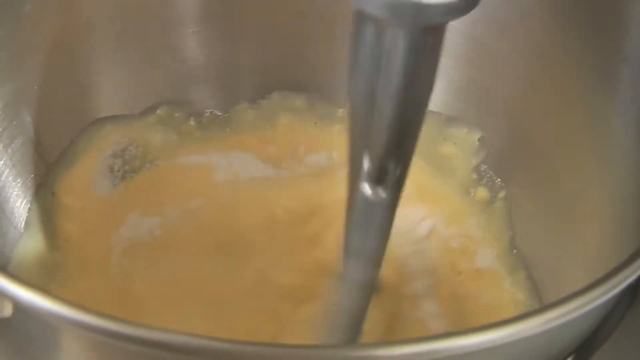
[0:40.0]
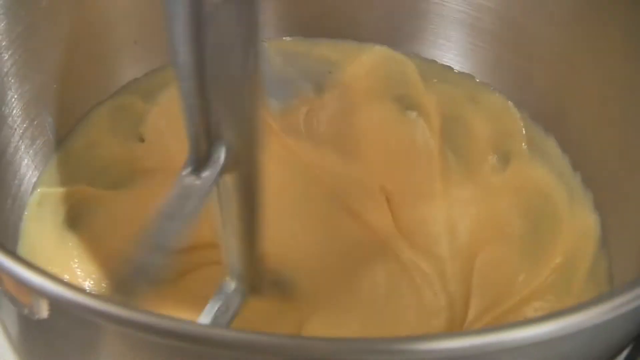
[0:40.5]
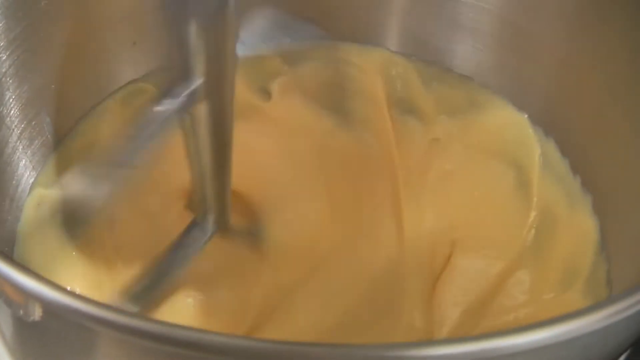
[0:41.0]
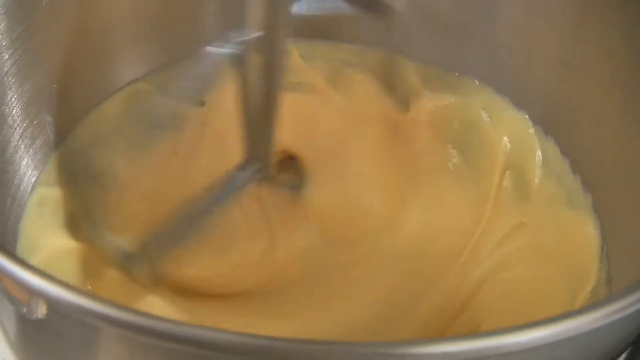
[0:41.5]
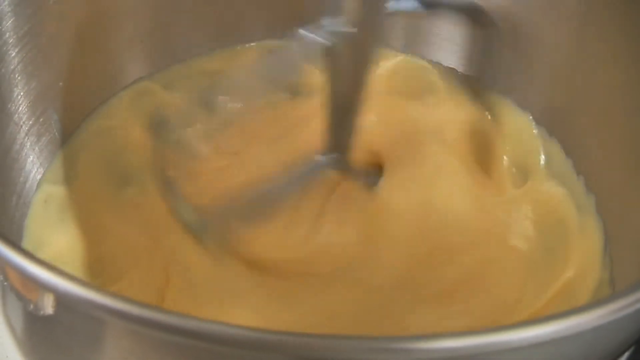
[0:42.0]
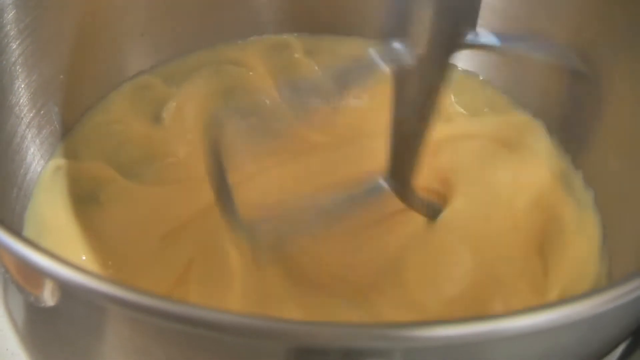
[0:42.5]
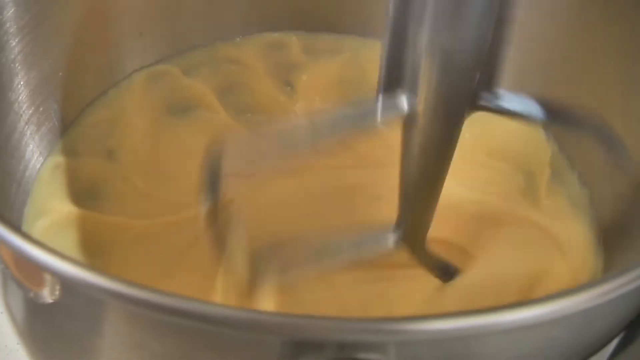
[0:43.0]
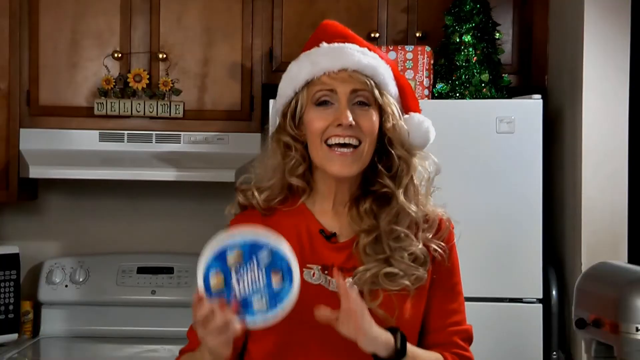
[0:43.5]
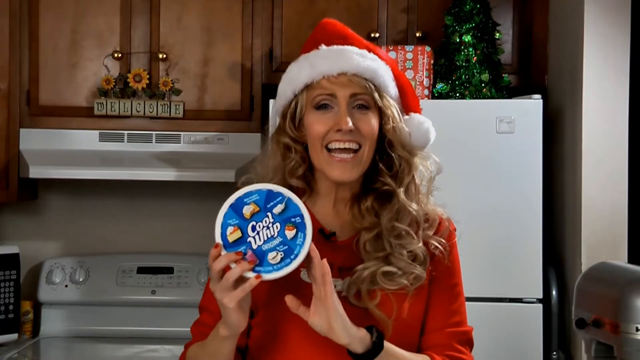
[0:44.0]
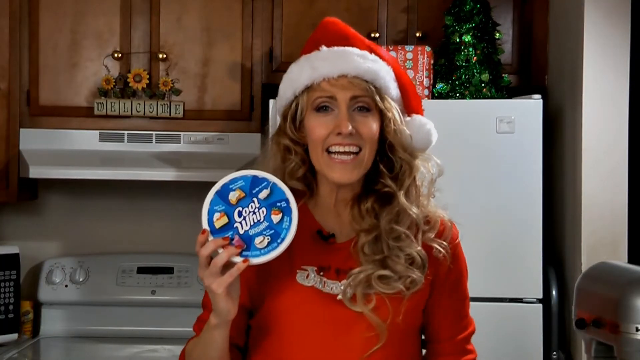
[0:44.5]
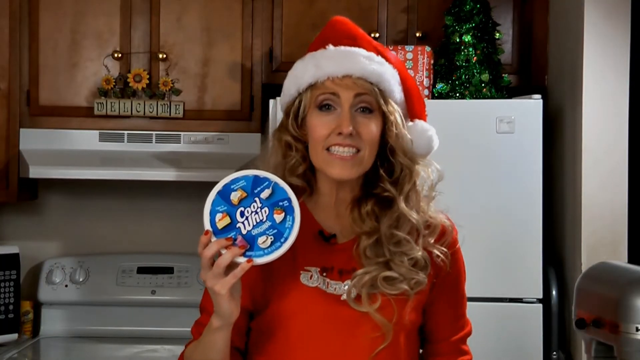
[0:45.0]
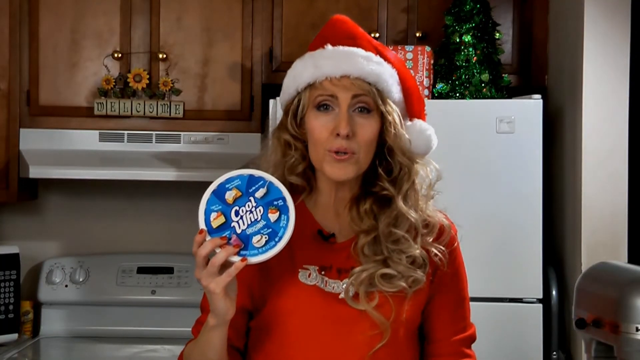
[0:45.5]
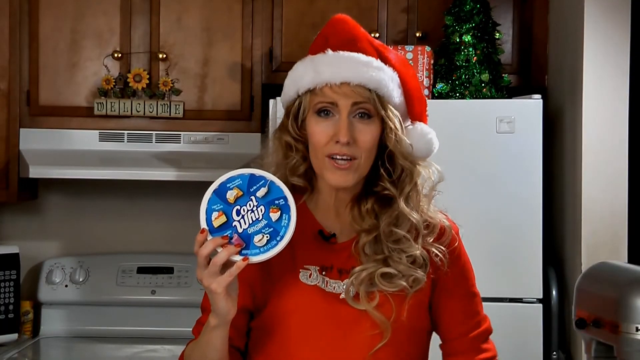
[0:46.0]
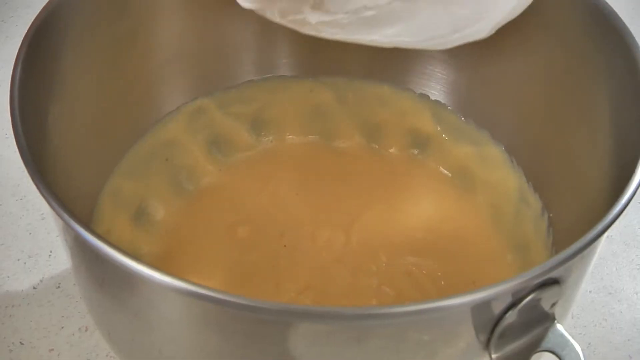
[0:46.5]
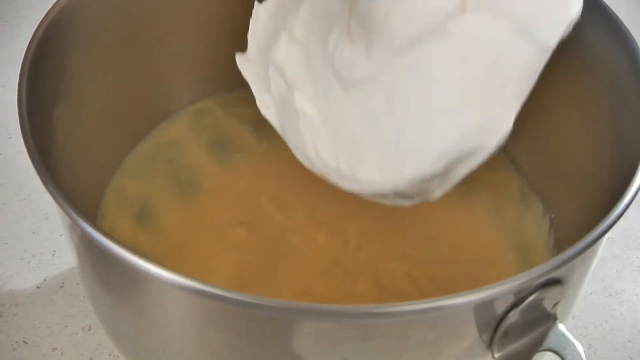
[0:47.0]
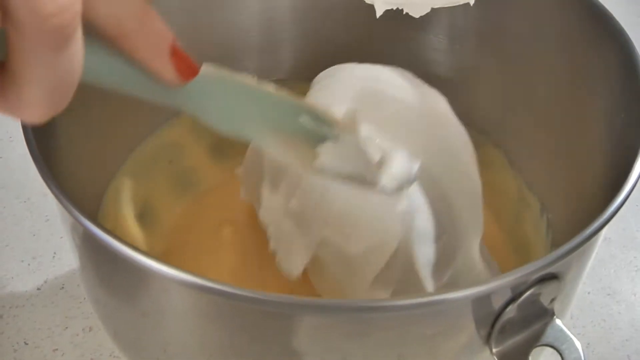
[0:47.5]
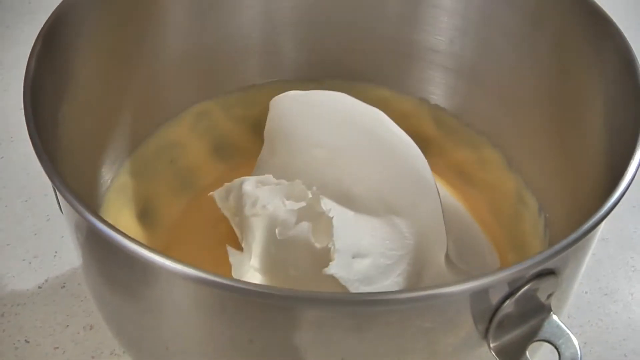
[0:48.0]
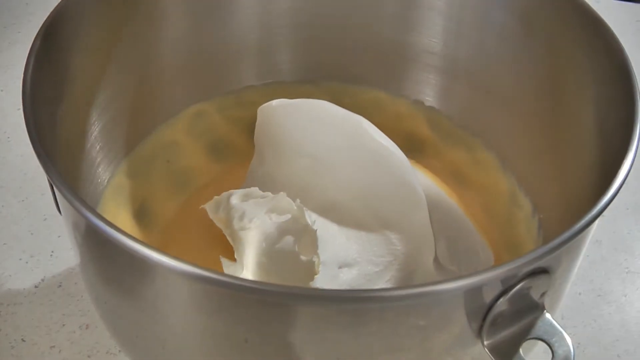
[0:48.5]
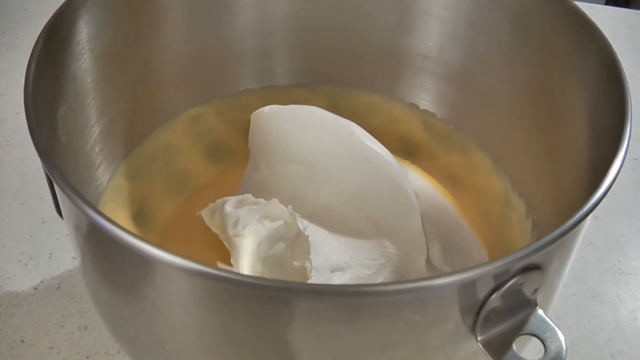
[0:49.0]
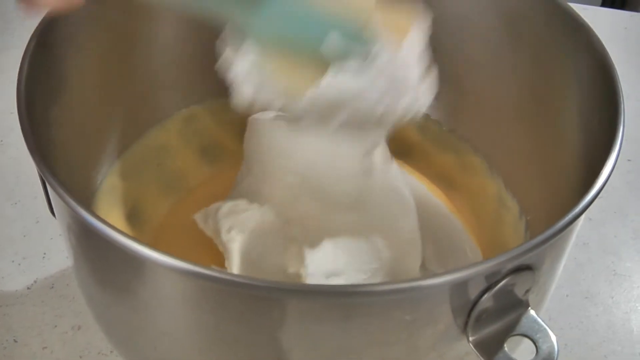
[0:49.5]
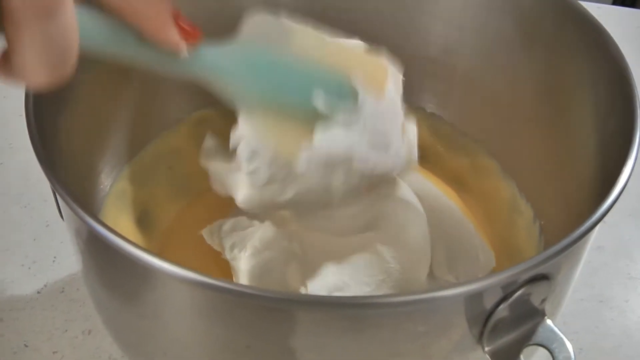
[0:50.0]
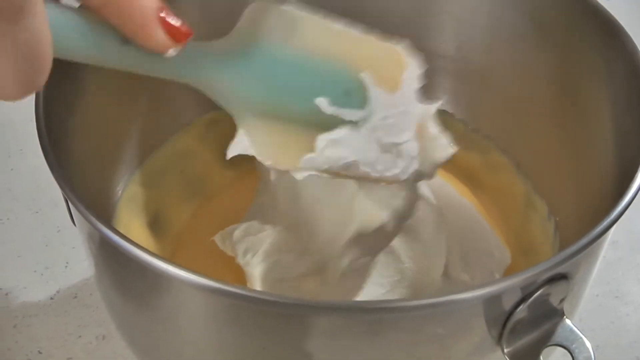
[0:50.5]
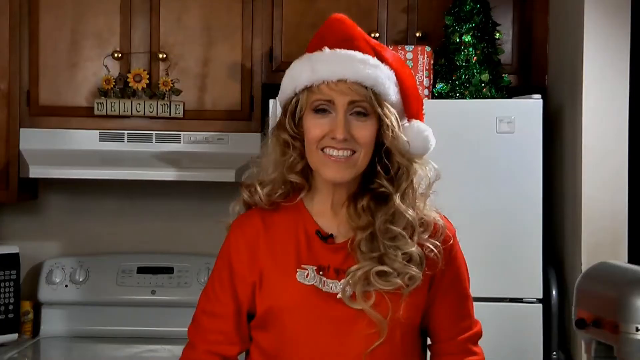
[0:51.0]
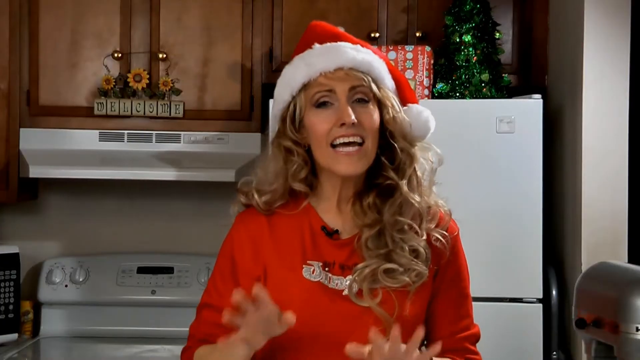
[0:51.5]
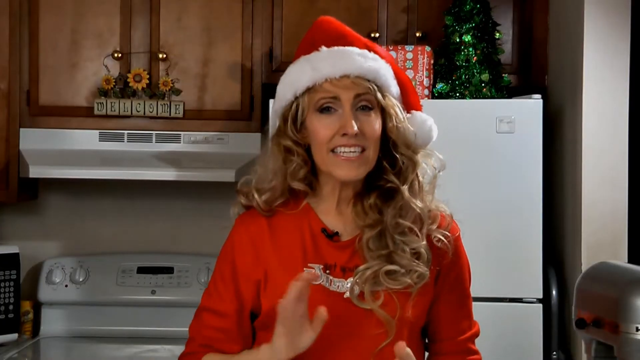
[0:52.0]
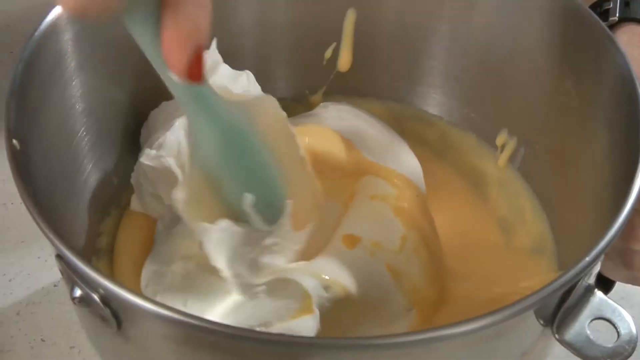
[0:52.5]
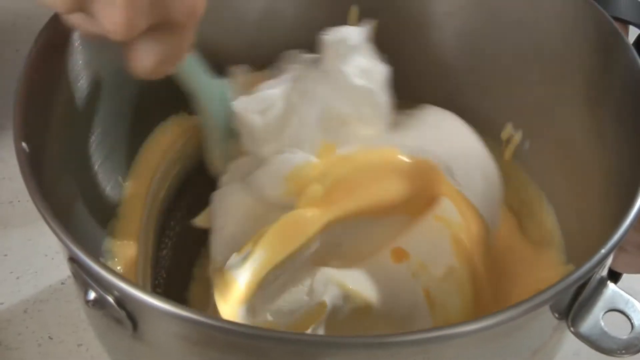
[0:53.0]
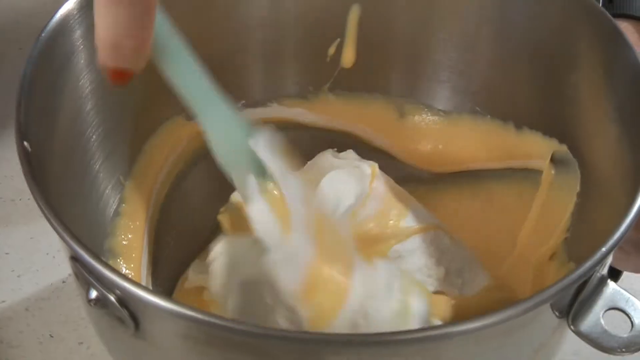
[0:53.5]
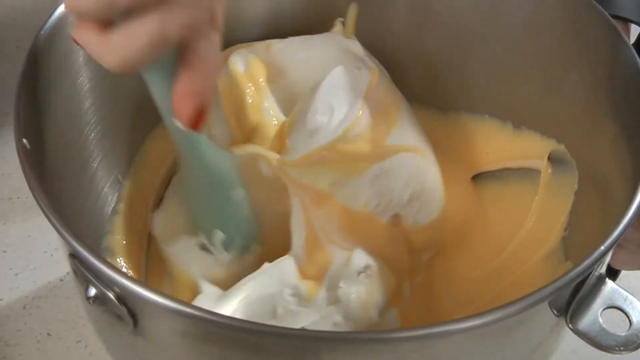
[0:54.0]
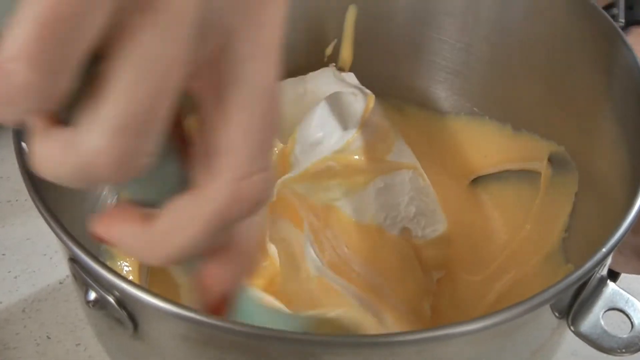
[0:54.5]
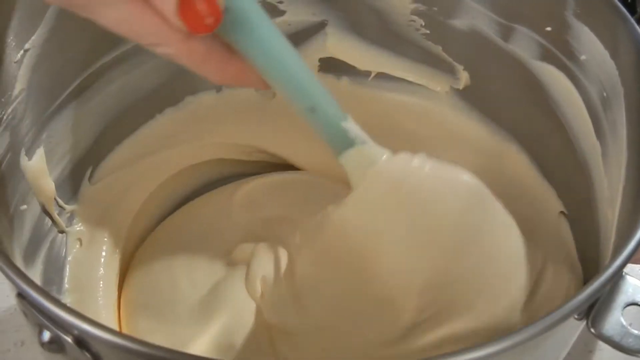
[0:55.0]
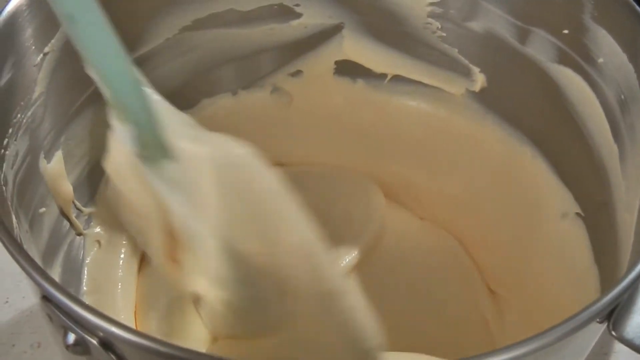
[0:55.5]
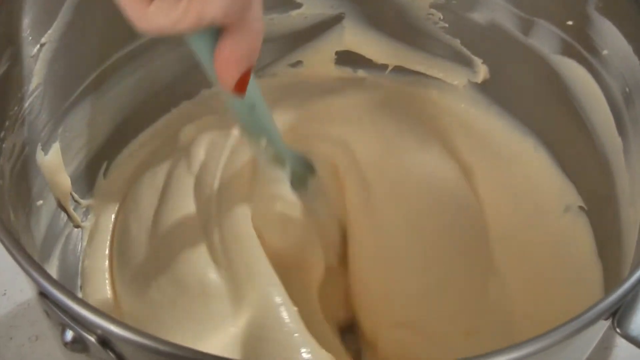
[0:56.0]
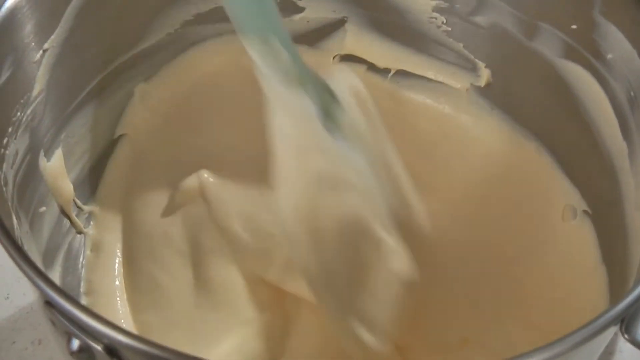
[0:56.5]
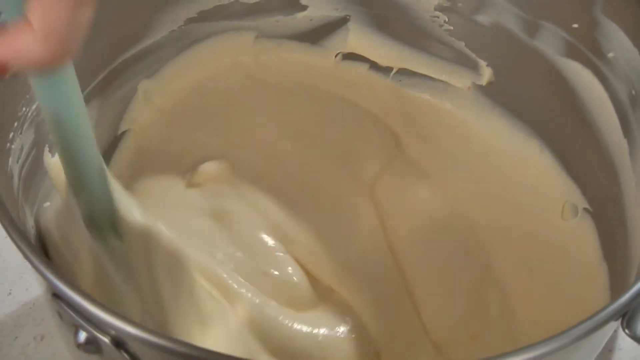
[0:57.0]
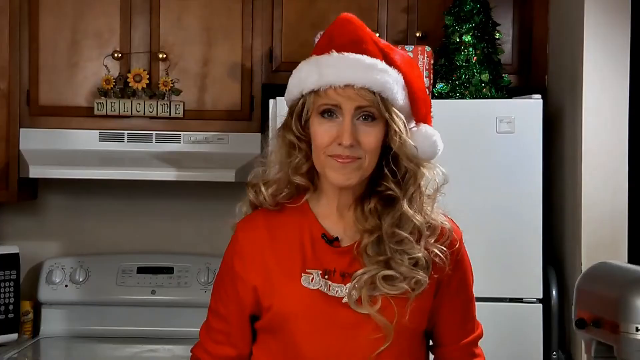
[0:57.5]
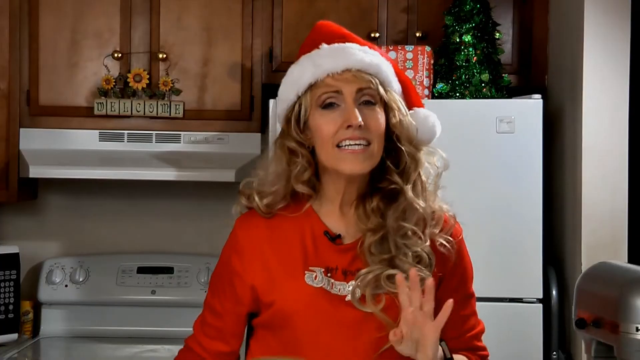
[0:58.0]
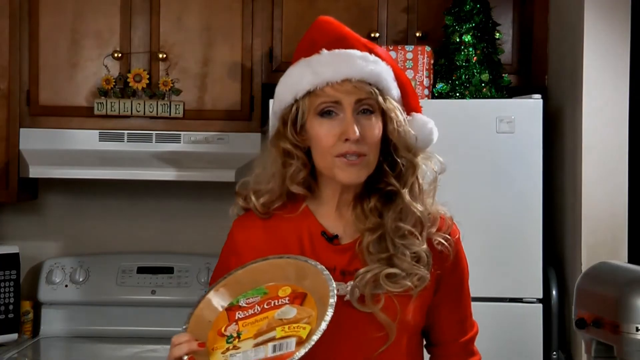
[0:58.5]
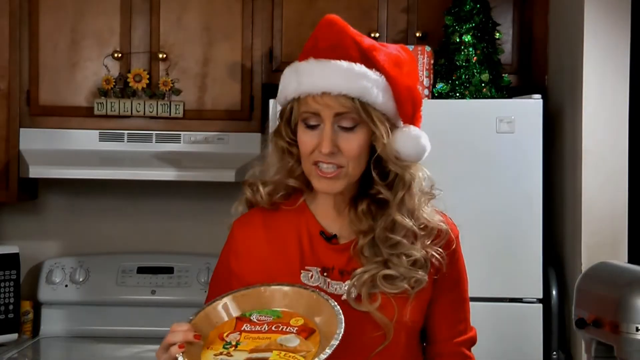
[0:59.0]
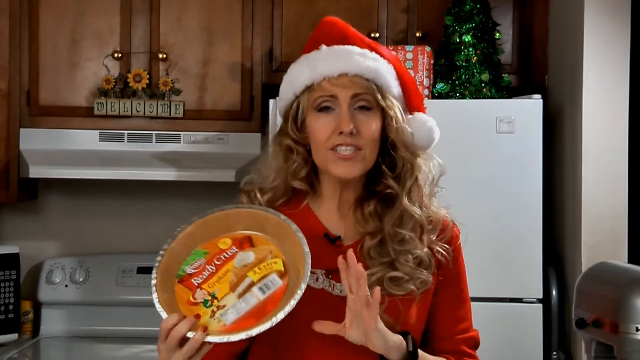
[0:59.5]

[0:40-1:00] The mixture is still being mixed, coming together and turning a cream color. The woman holds a pack of Cool Whip in her right hand and puts all of it into the pan that is mixing. The shot then shows her mixing the Cool Whip into the mixture herself with a small spatula, like silverware, before it transitions back to the automatic mixer.